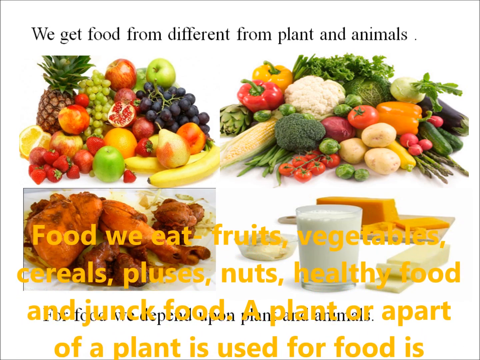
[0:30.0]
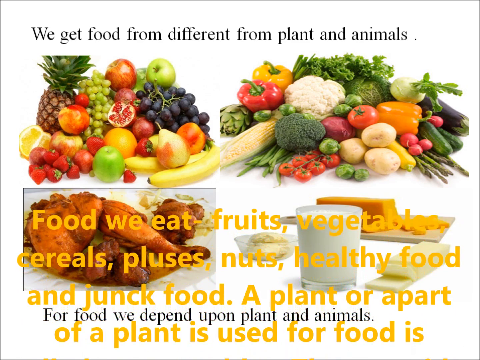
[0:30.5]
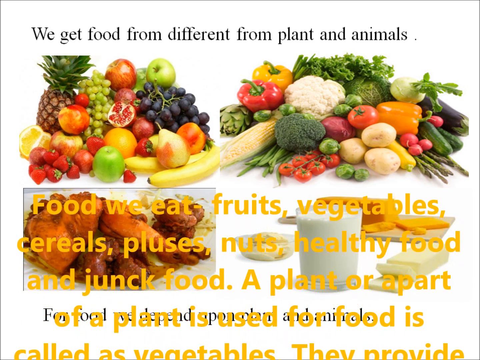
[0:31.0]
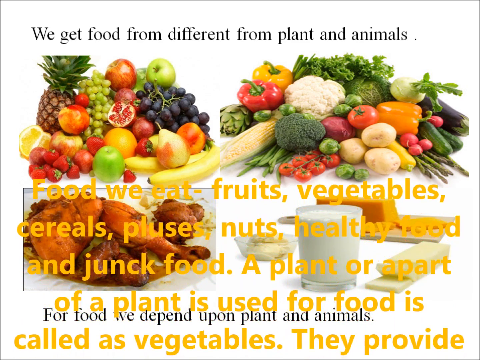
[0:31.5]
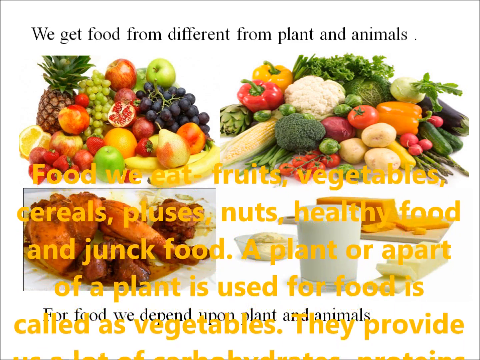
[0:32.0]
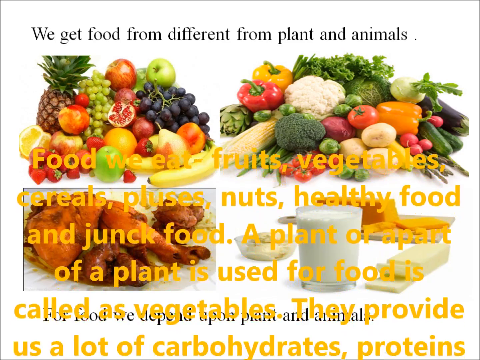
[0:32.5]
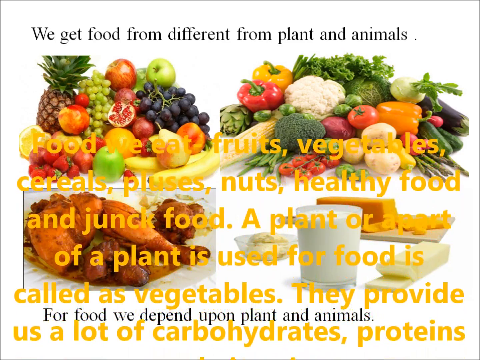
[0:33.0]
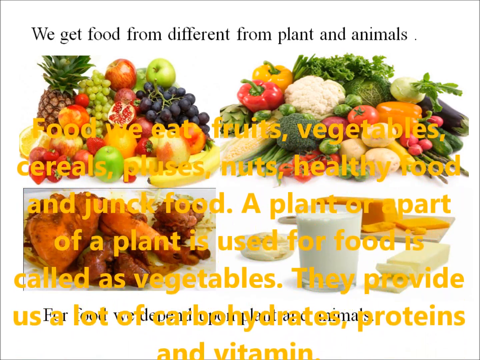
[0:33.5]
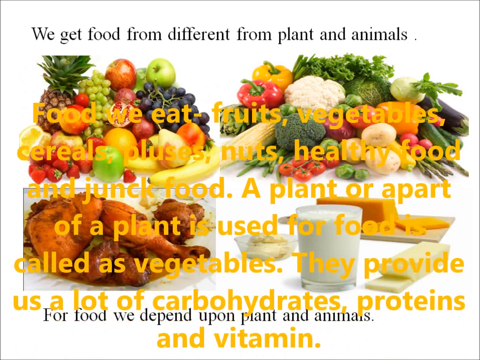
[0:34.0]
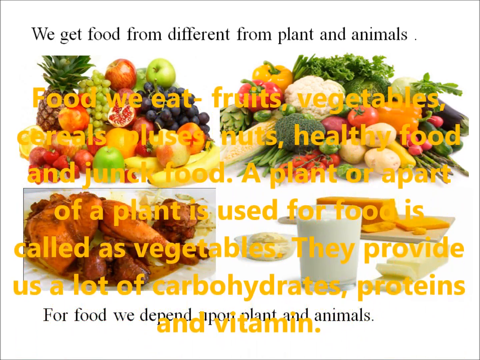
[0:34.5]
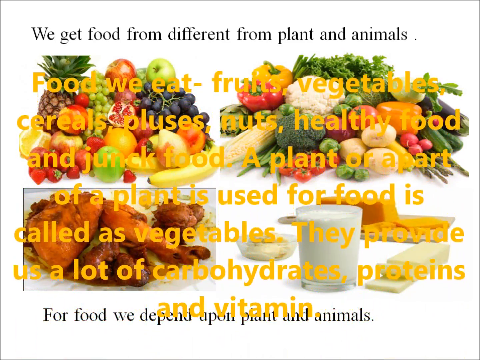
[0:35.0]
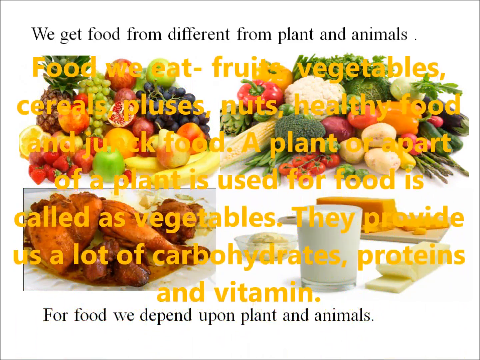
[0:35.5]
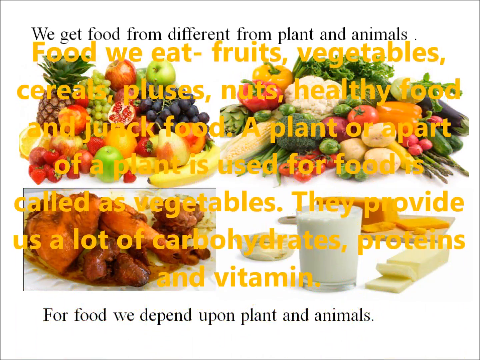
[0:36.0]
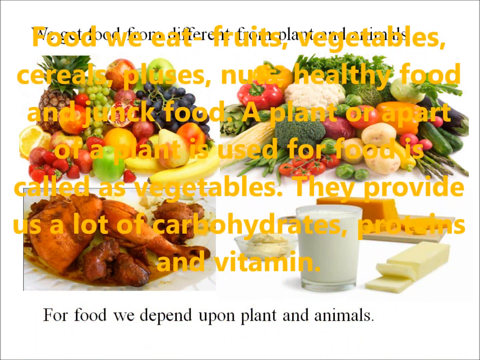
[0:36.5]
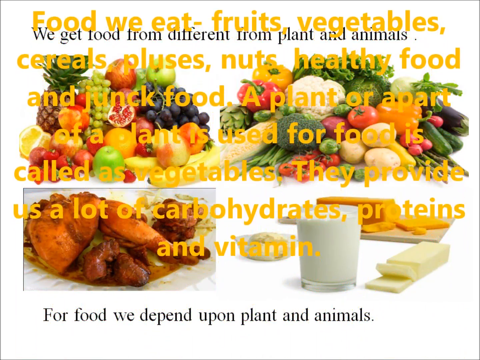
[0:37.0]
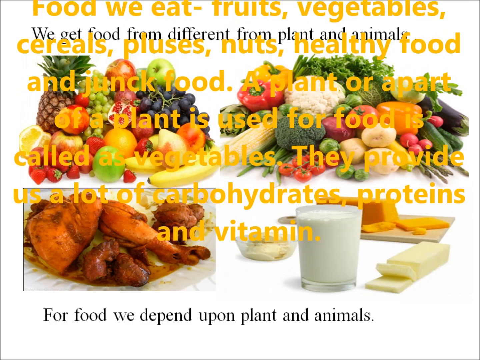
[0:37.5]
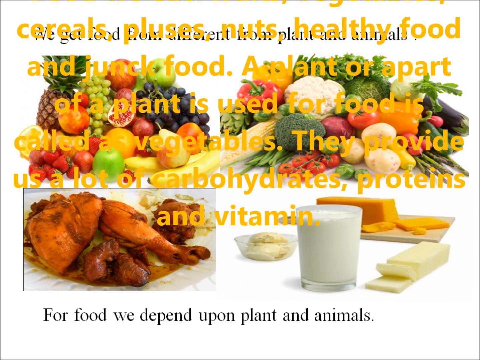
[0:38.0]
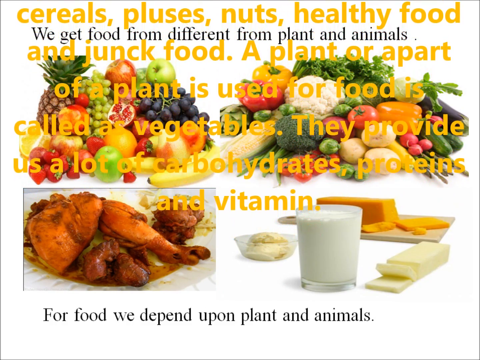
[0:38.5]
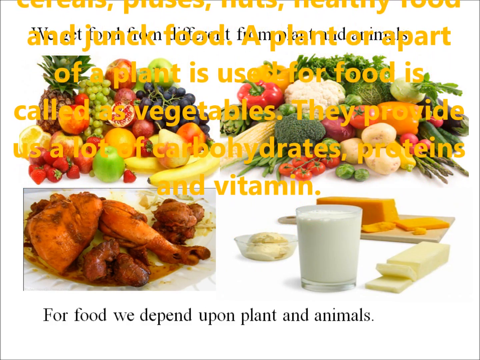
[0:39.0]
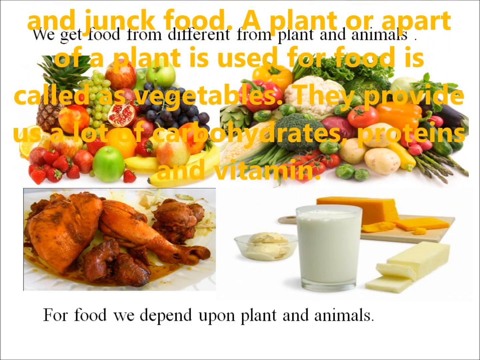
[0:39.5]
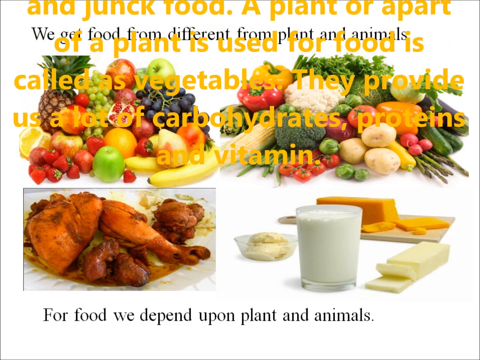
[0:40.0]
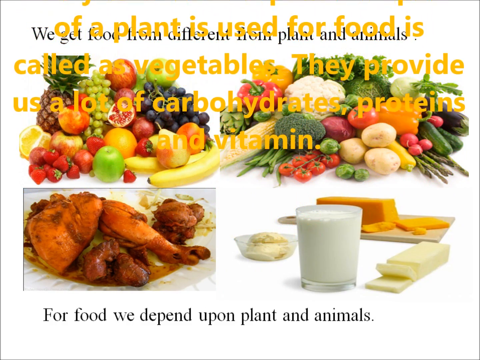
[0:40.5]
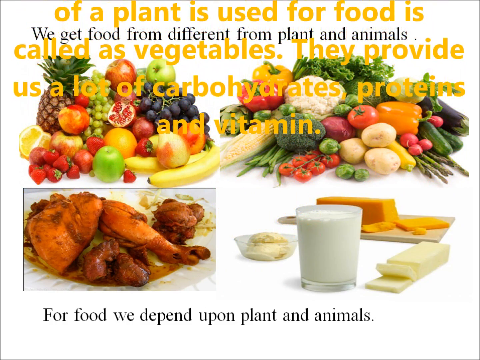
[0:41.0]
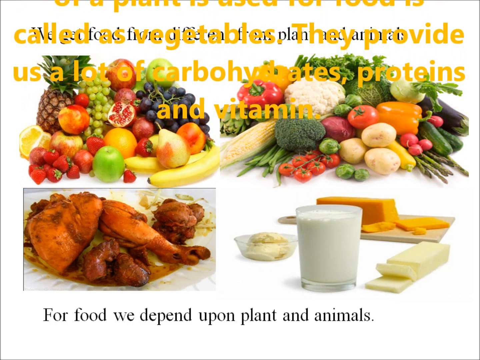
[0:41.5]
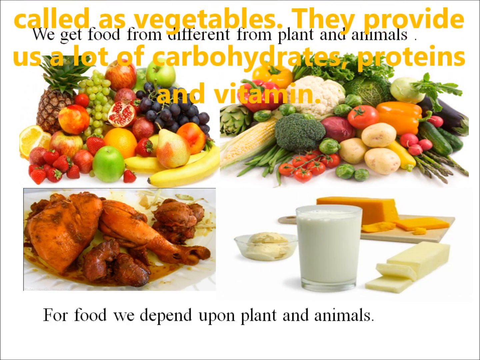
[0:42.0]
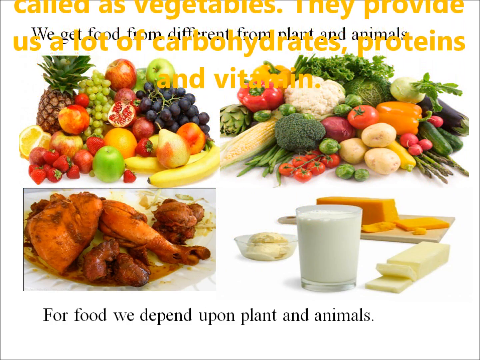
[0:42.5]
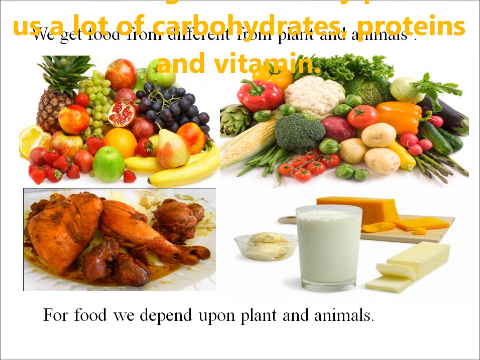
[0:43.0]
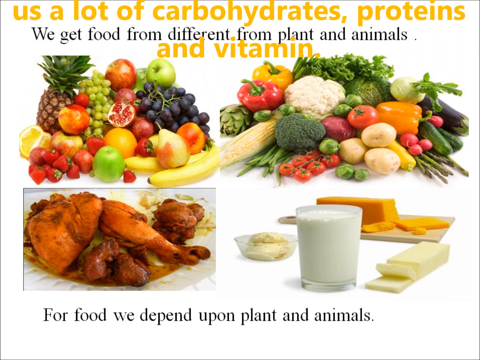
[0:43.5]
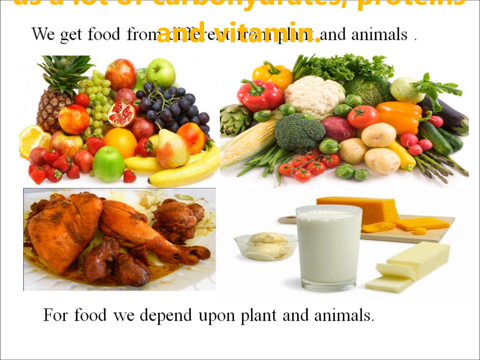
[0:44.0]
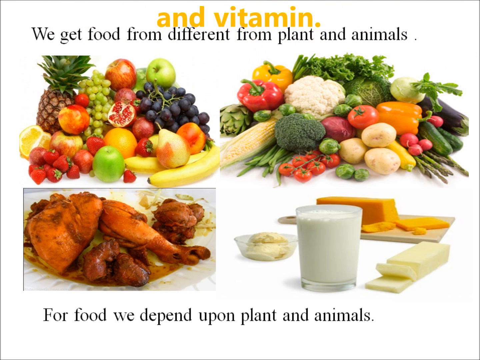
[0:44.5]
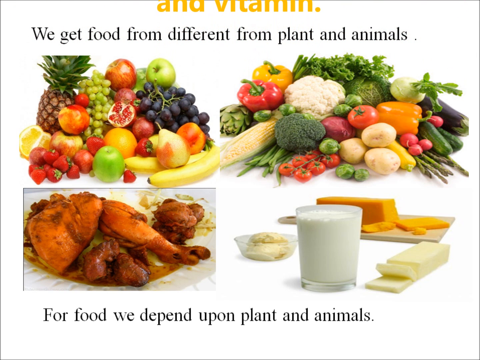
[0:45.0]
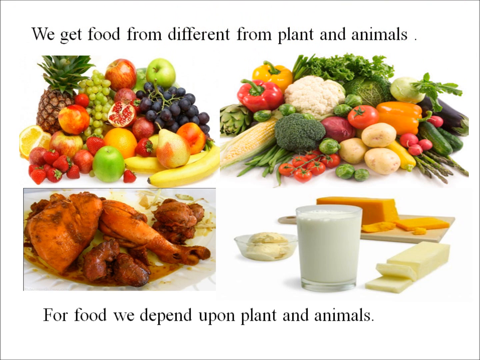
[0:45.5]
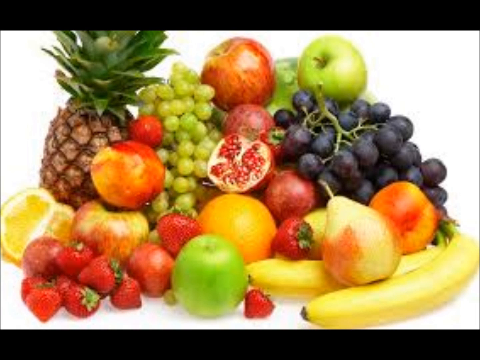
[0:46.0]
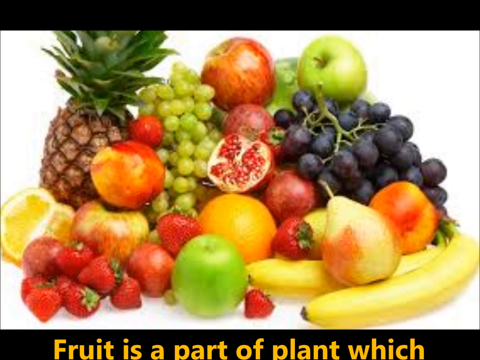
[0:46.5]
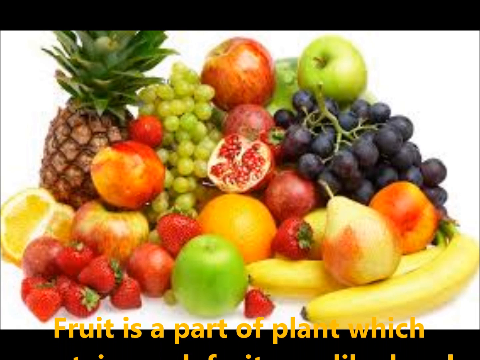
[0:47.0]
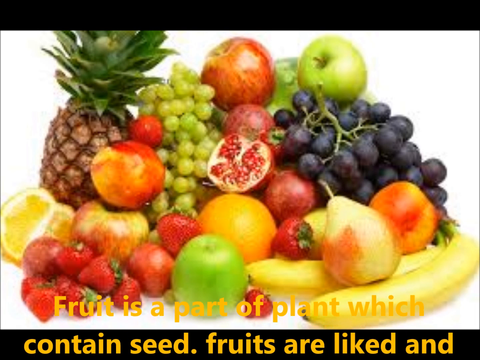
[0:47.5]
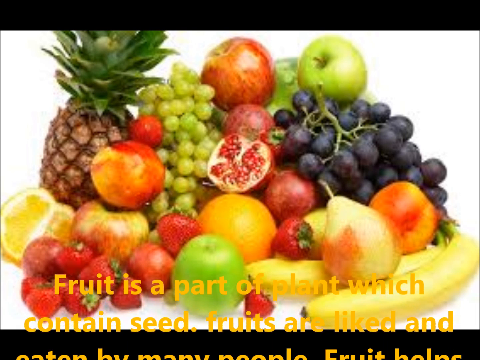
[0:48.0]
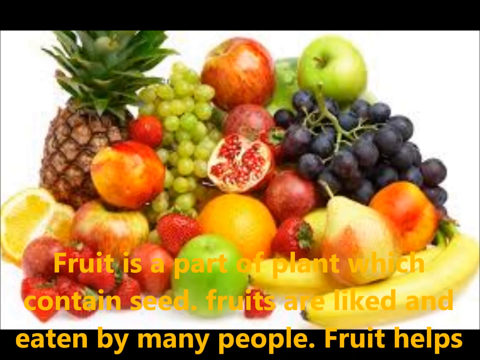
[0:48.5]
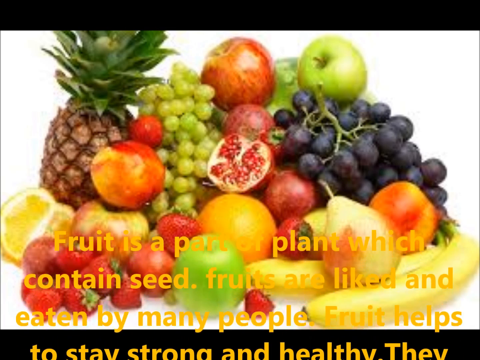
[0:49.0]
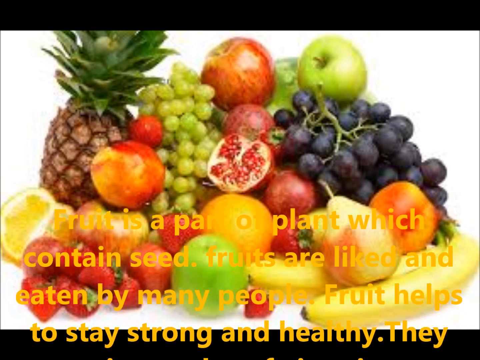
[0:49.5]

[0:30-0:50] The video pans across a whole bunch of images of different fruits and foods, with turkey at the bottom left and cheese also visible. Over the food images, text says "food from the different plants and animals", and at the bottom it says "for food, we depend upon plants and animals". It then immediately transitions to a solo shot of the fruits, including pineapples, grapes, apples, blueberries, pears, bananas and strawberries. While this picture is on screen, text floats up from the bottom of the screen to the top about fruit and how it is part of the plant, mentioning cereals, nuts and loaves of bread. The words move to the top of the screen until they are out of view, and then the video pauses.